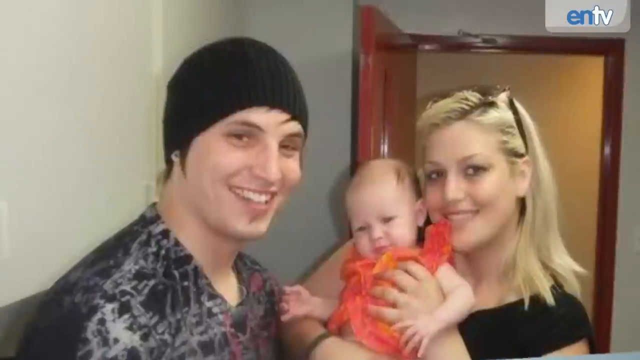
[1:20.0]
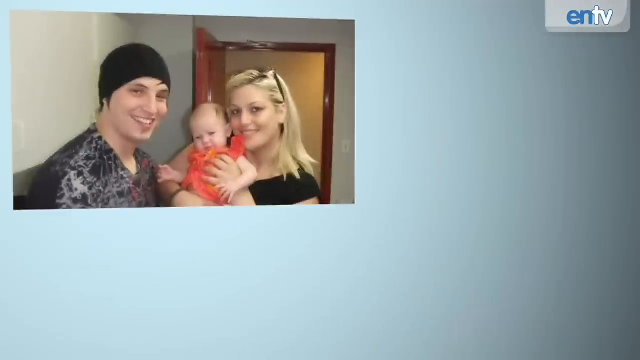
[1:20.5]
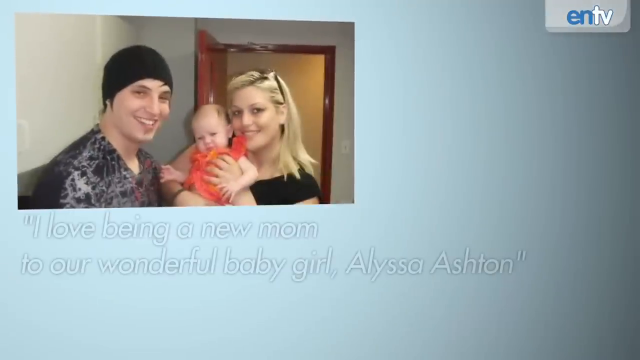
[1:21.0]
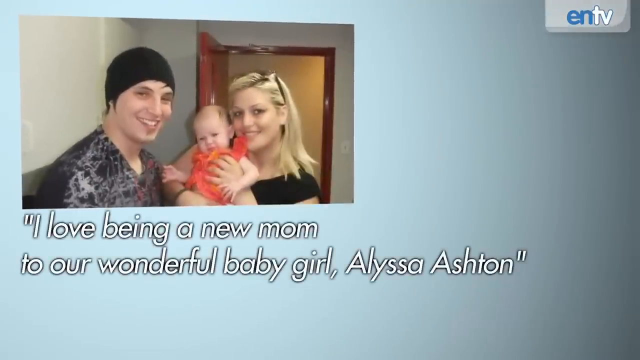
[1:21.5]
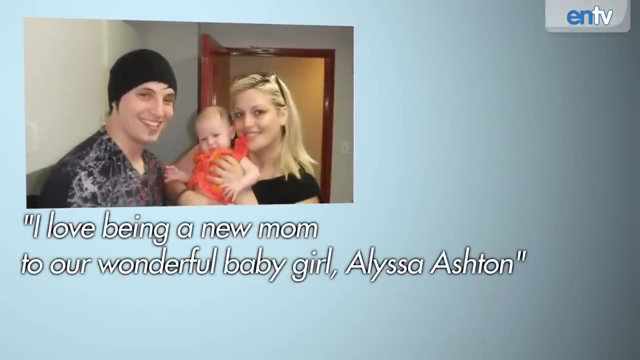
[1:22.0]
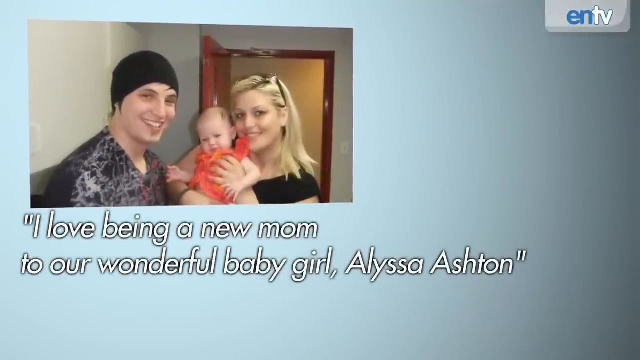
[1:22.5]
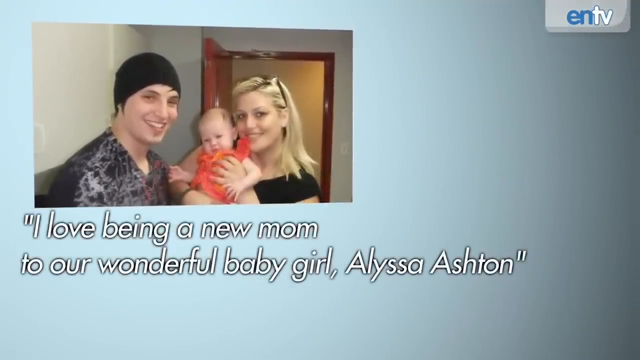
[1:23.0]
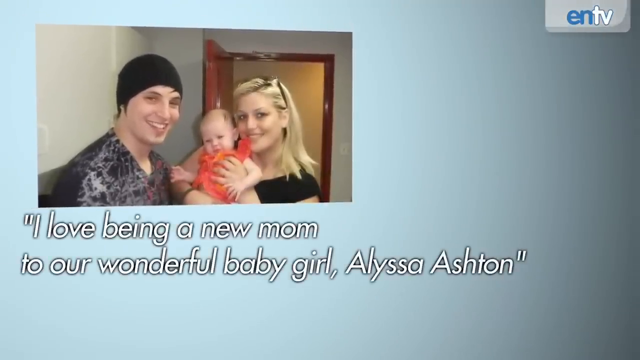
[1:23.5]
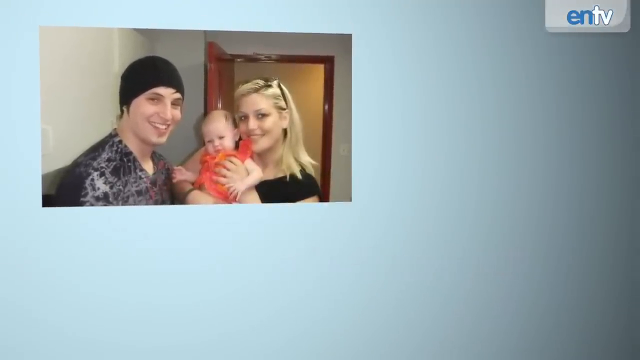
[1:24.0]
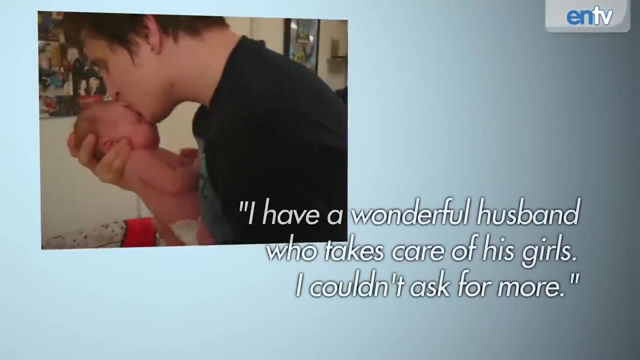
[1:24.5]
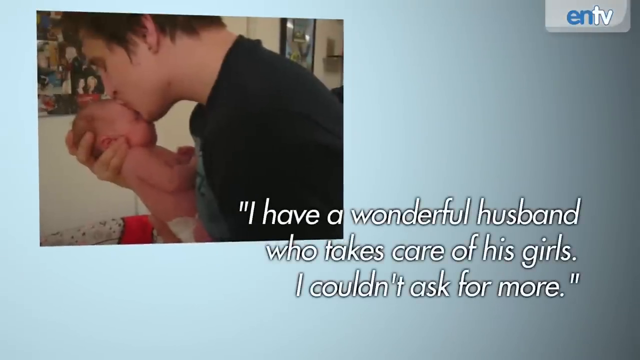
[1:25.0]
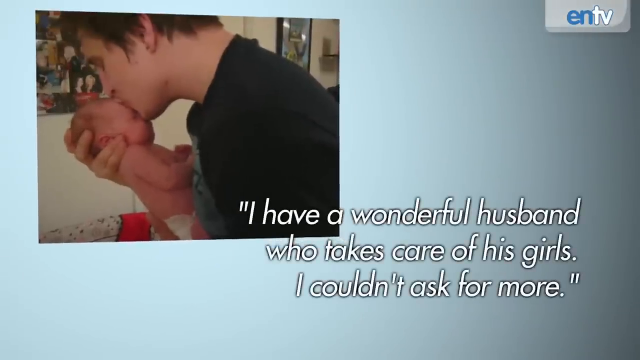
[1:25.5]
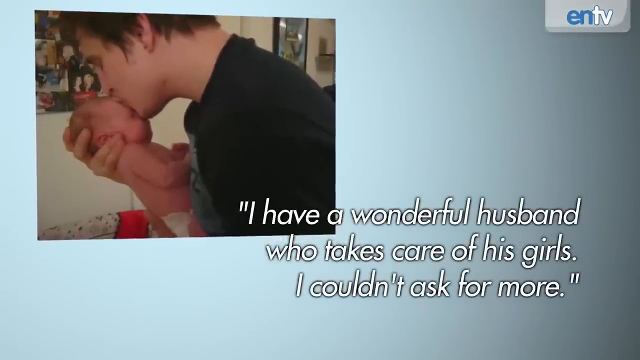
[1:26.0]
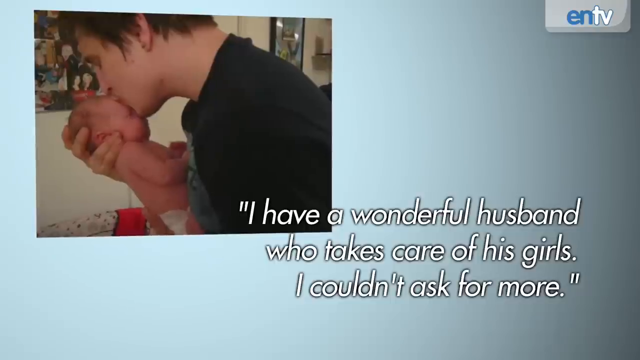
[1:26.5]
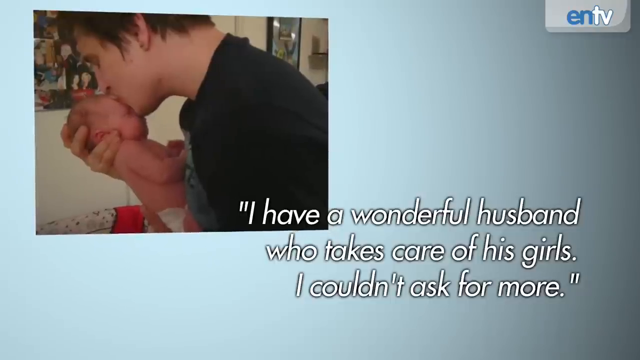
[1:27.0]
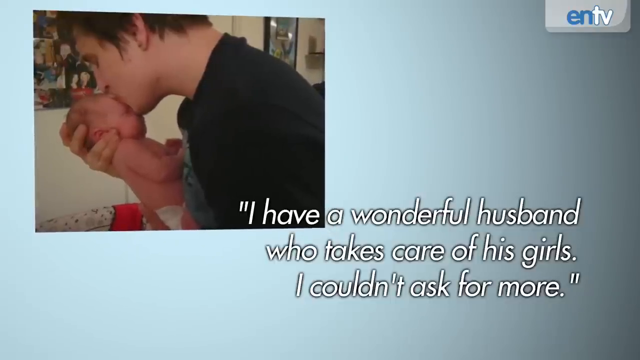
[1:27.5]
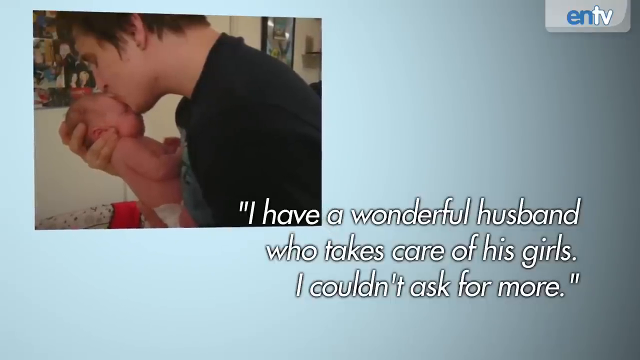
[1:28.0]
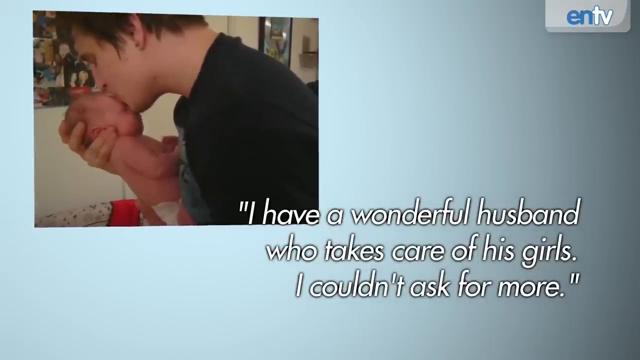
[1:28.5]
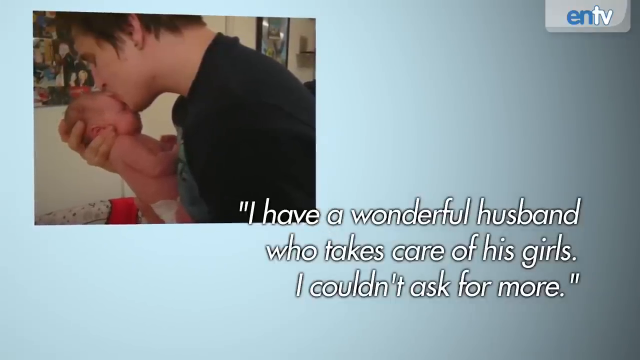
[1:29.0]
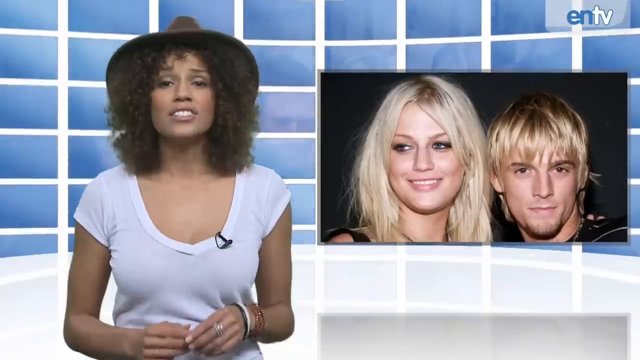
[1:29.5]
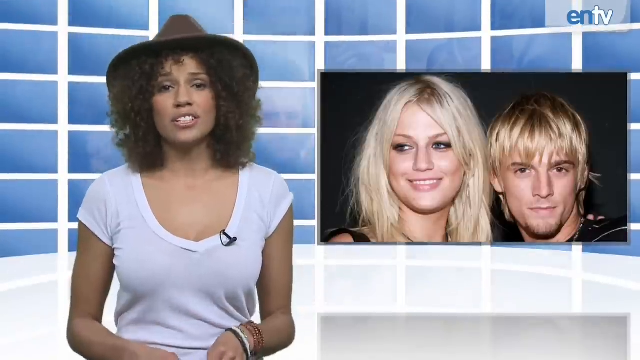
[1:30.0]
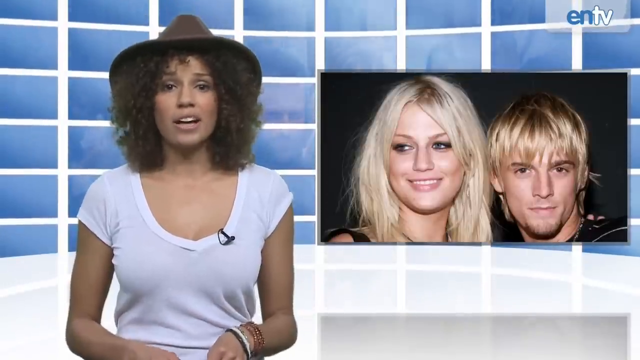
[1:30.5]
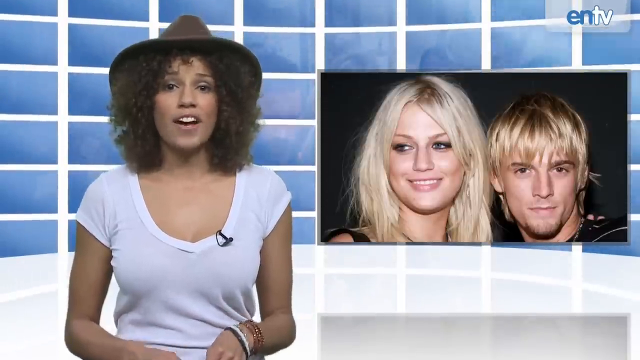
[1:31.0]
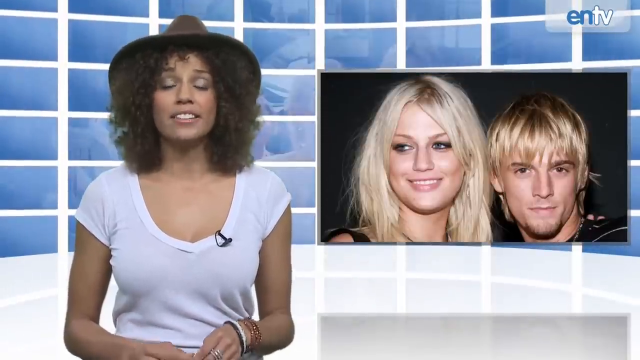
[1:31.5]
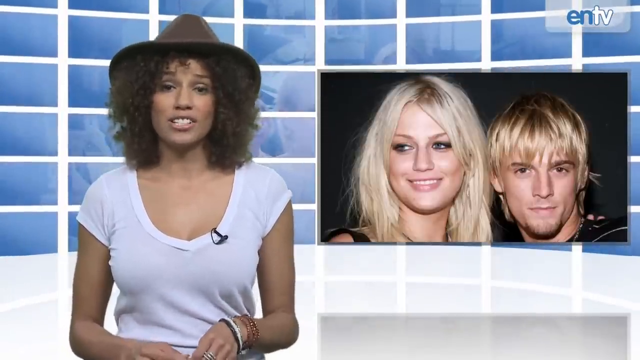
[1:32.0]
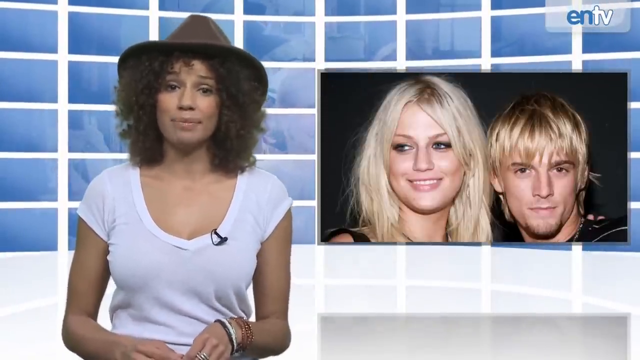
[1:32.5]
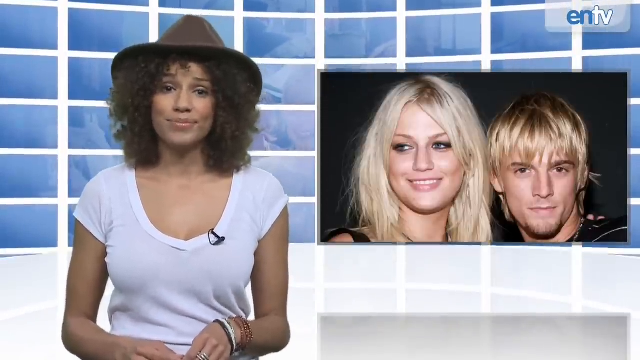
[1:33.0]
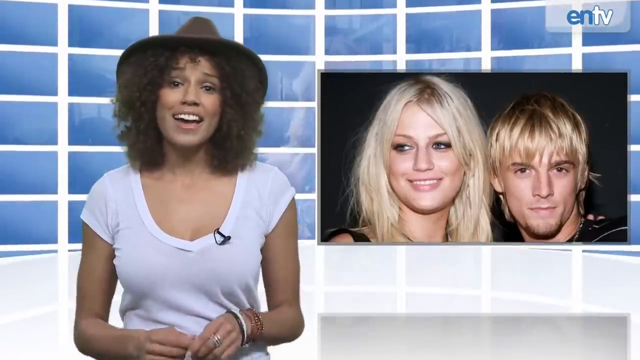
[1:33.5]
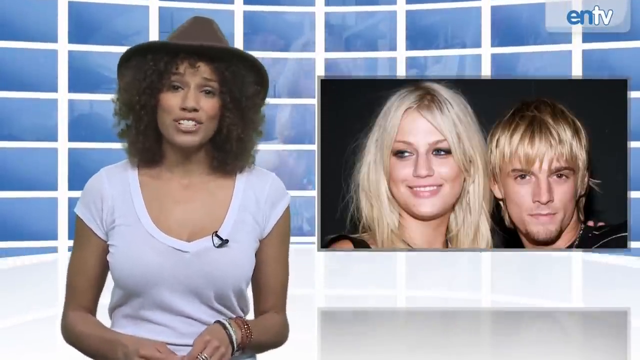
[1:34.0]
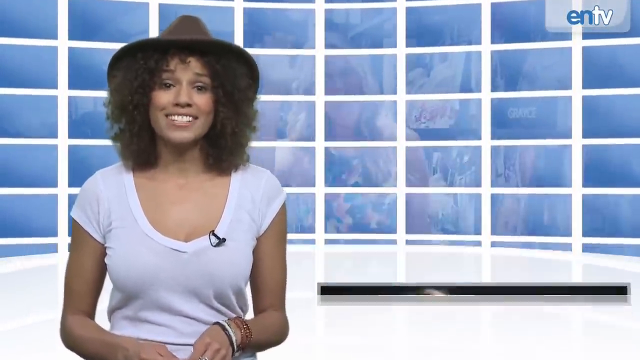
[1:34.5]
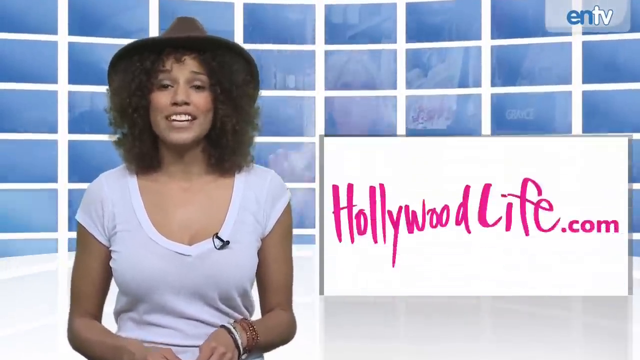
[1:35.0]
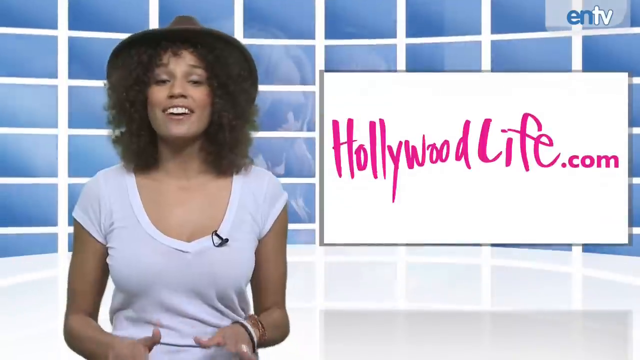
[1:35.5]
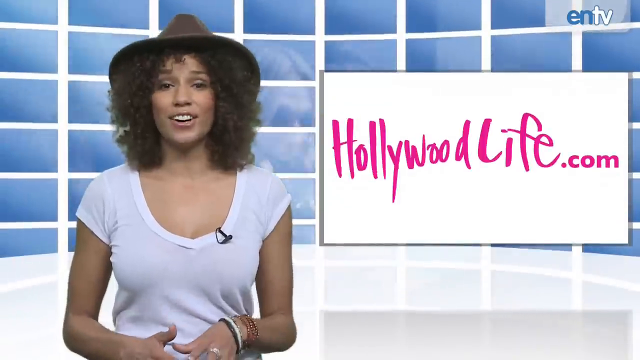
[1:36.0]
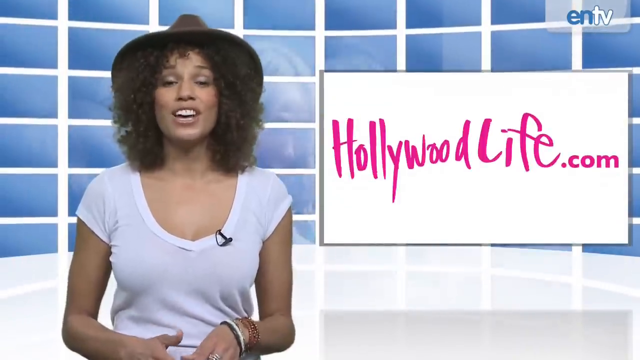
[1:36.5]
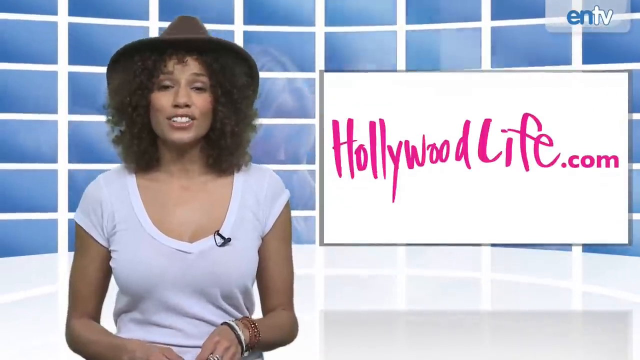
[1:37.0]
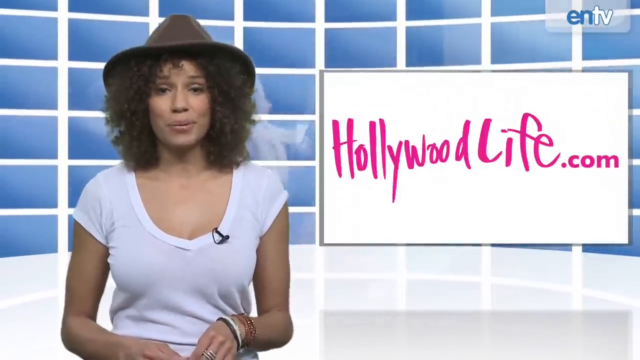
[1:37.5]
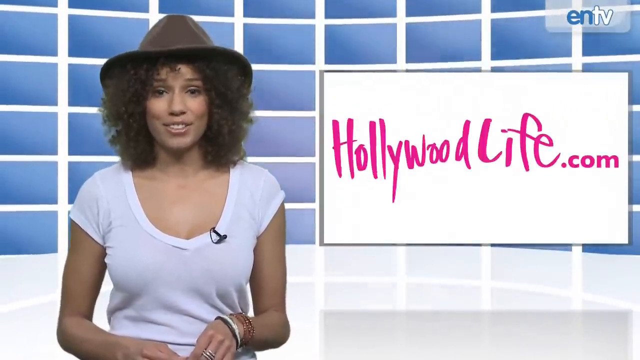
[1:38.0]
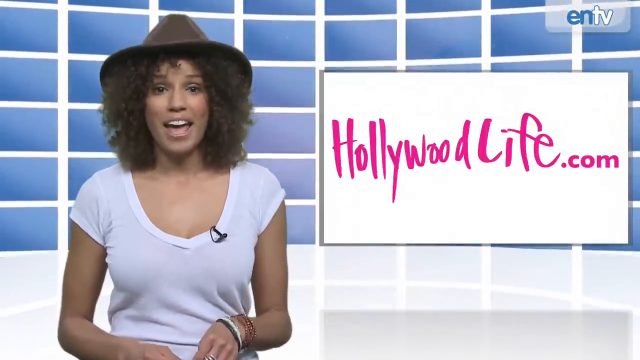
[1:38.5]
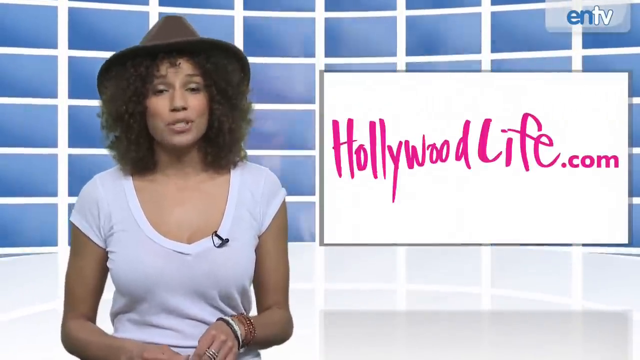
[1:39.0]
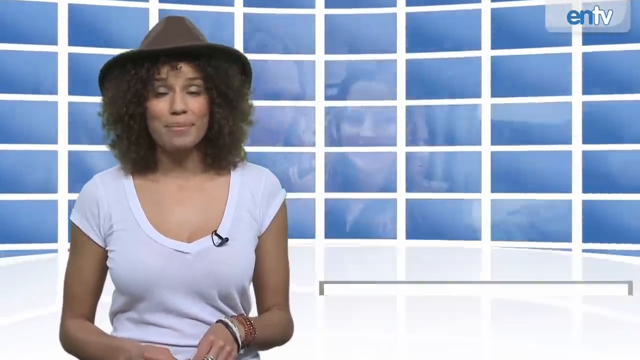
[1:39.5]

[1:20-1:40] Another photo shows the couple with their baby, and a quote appears on screen: "I love being a new mom to our wonderful baby girl, Alyssa Ashton." A further photo shows the man kissing the baby, with the quote "I have a wonderful husband who takes care of his girls. I couldn't ask for more." The video returns to the newscaster speaking to camera in the studio; the photo of the woman disappears and is replaced by a logo for hollywoodlife.com.